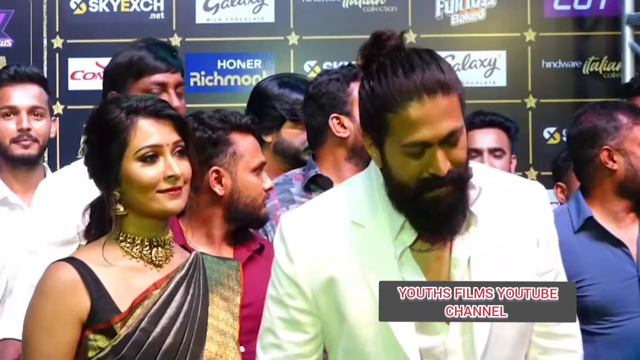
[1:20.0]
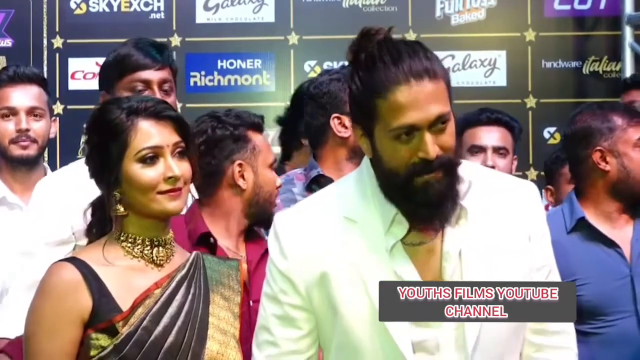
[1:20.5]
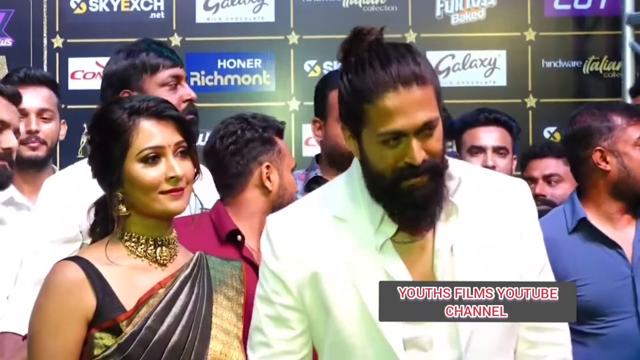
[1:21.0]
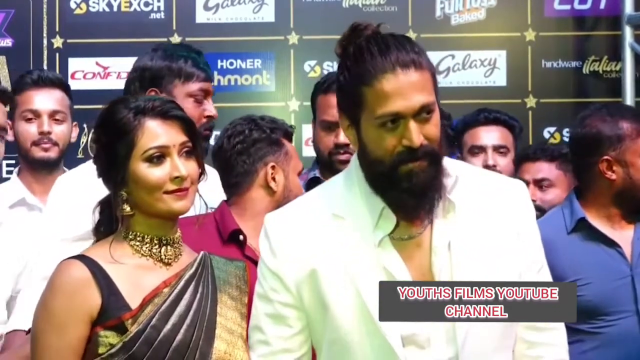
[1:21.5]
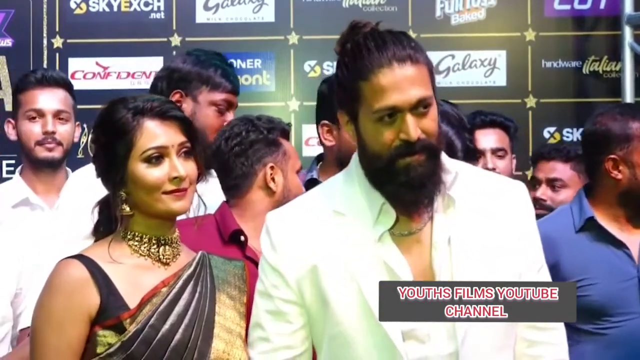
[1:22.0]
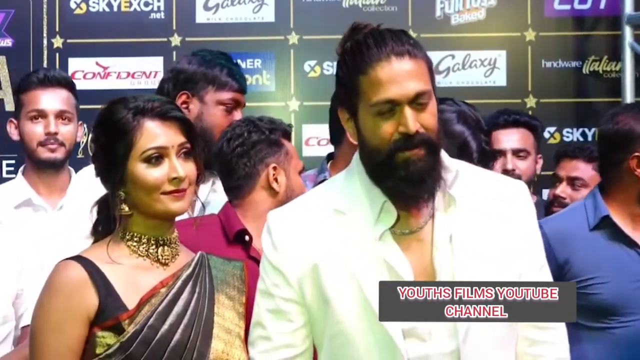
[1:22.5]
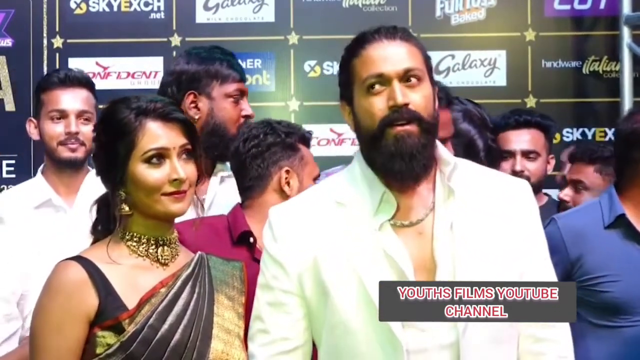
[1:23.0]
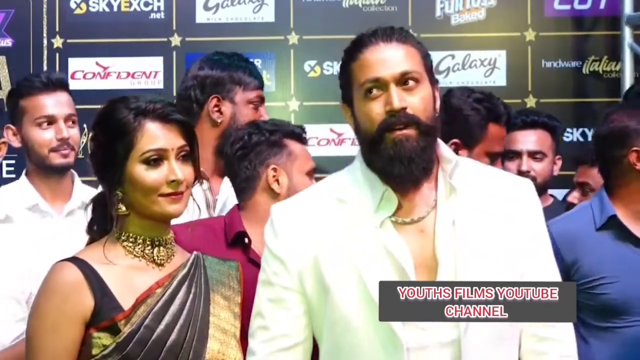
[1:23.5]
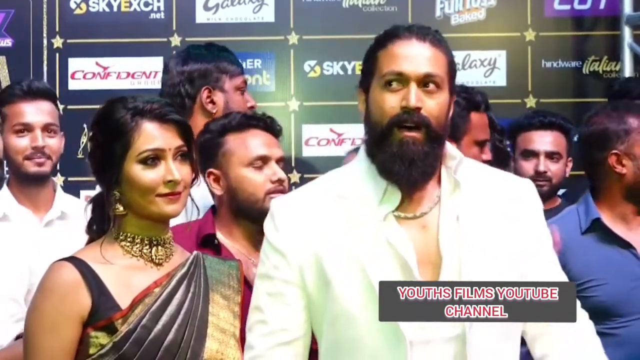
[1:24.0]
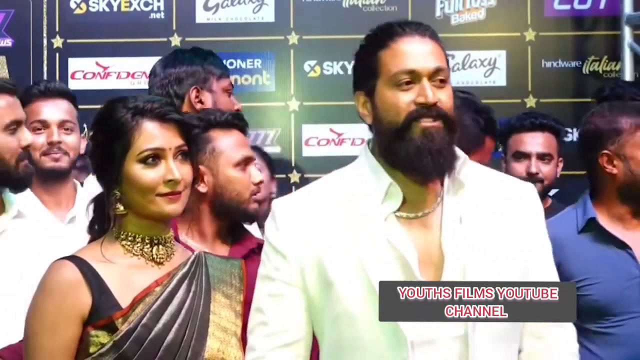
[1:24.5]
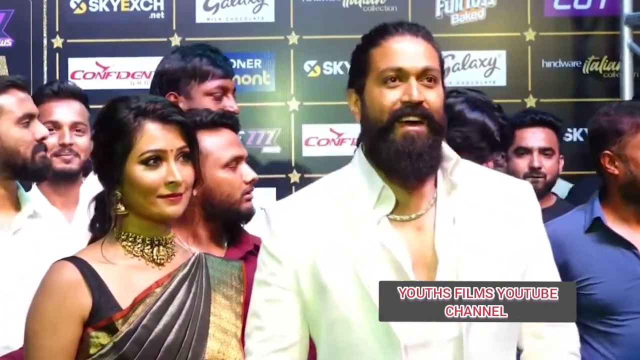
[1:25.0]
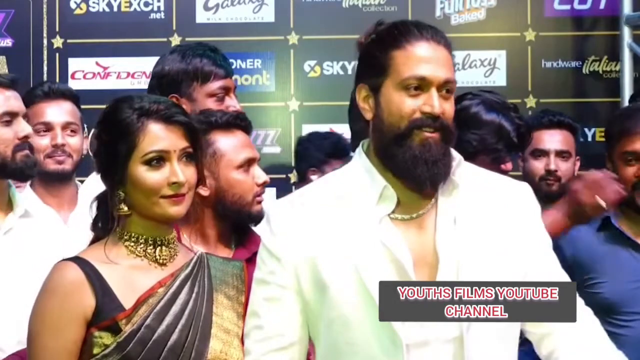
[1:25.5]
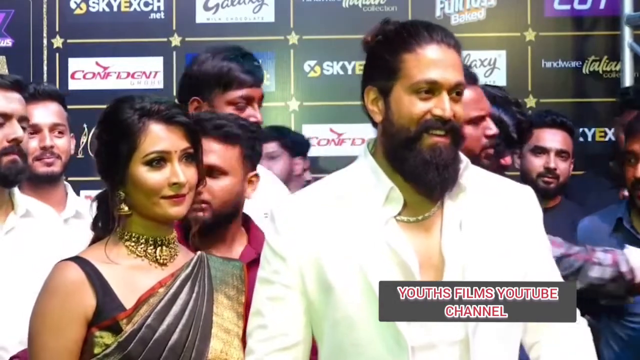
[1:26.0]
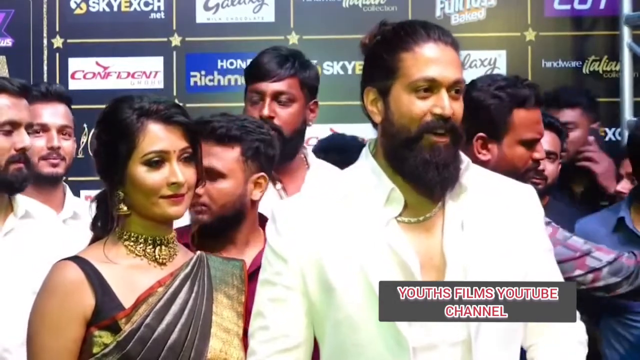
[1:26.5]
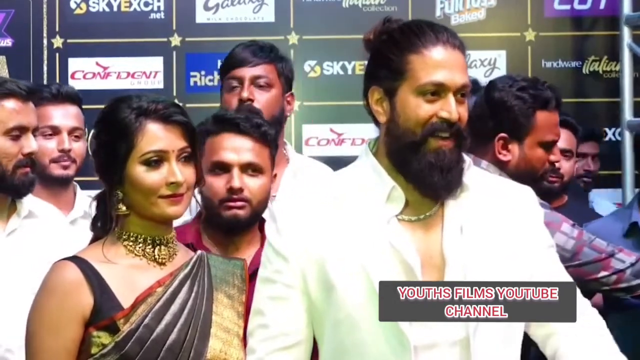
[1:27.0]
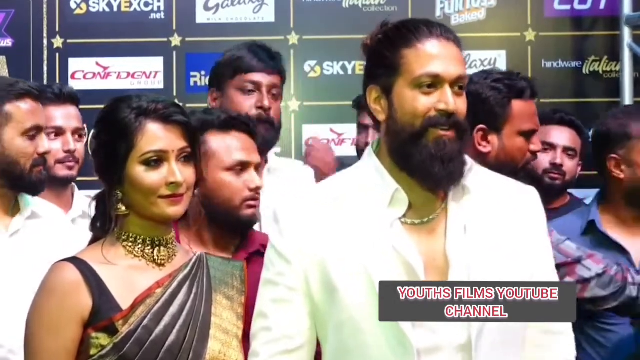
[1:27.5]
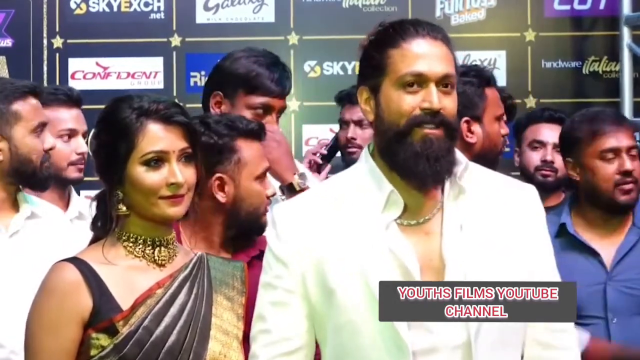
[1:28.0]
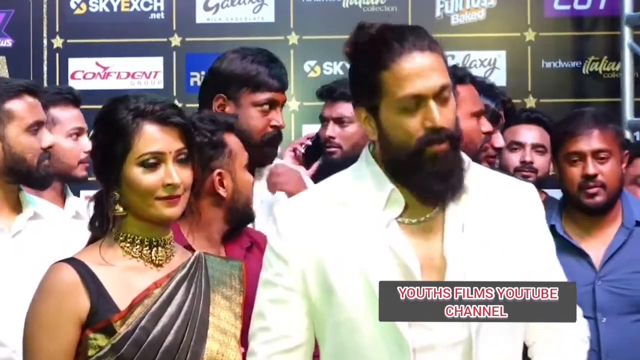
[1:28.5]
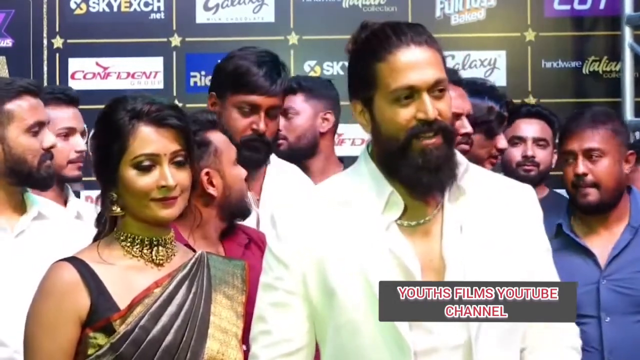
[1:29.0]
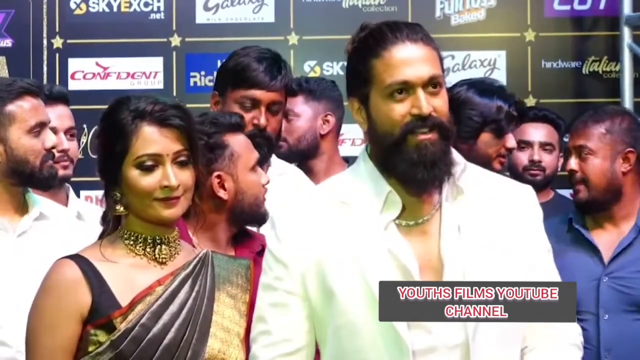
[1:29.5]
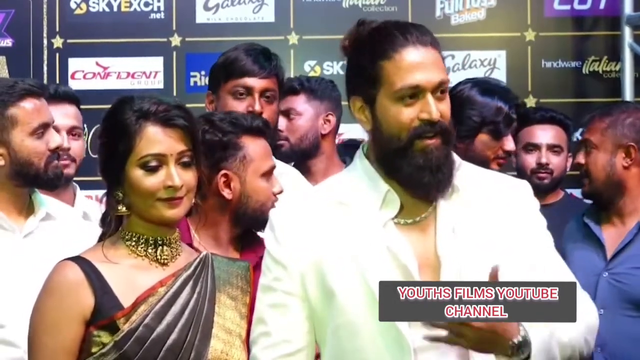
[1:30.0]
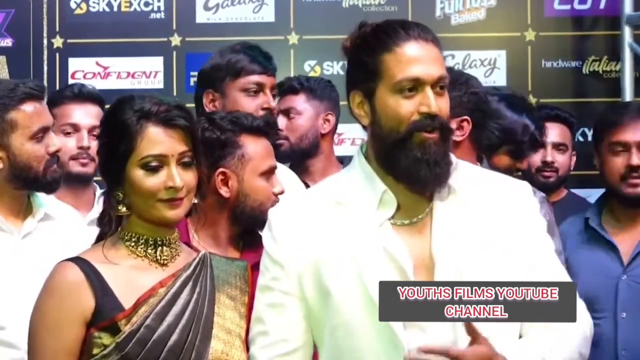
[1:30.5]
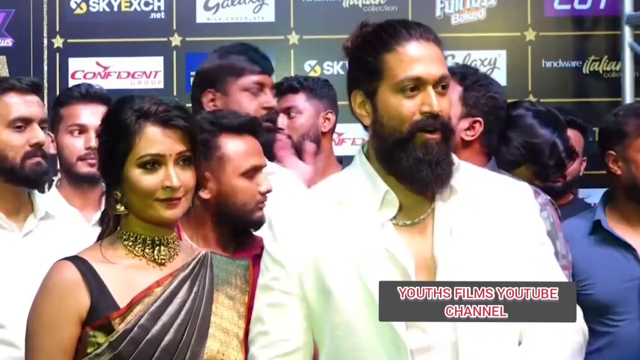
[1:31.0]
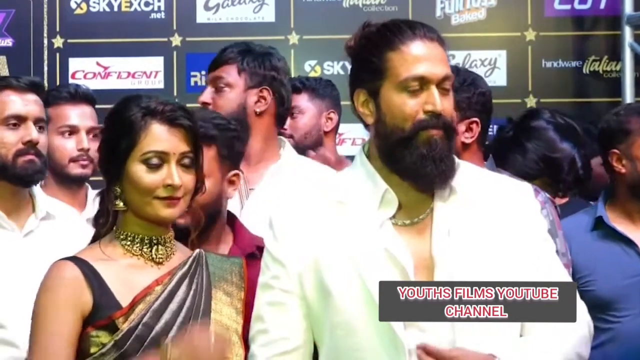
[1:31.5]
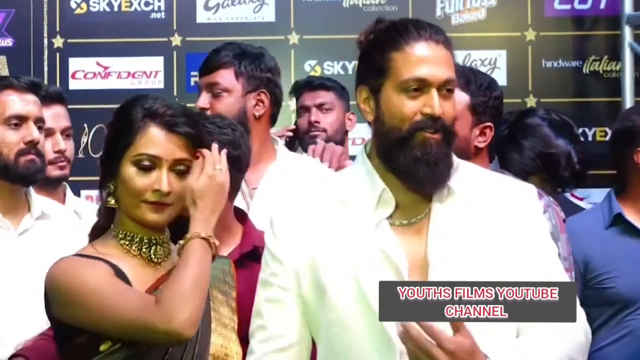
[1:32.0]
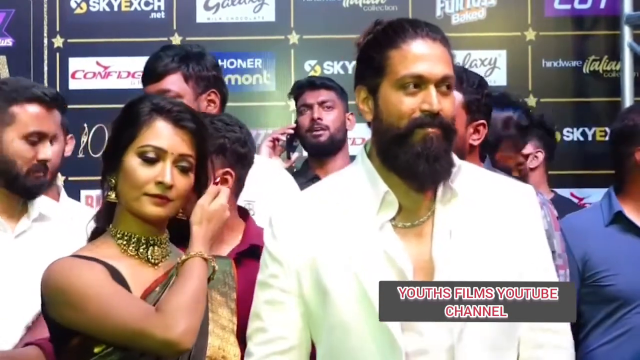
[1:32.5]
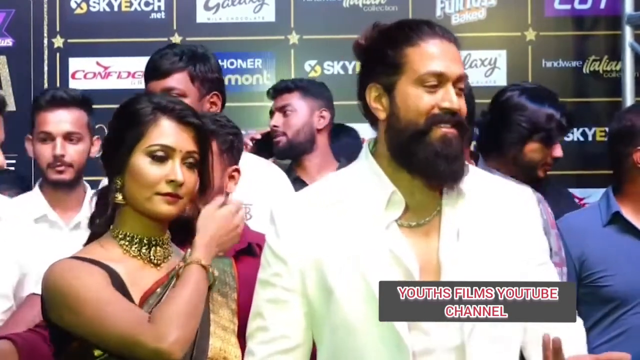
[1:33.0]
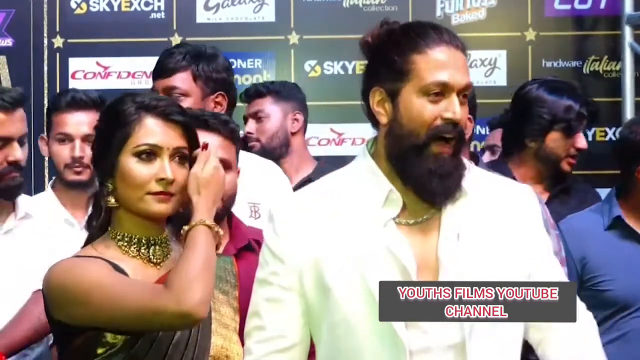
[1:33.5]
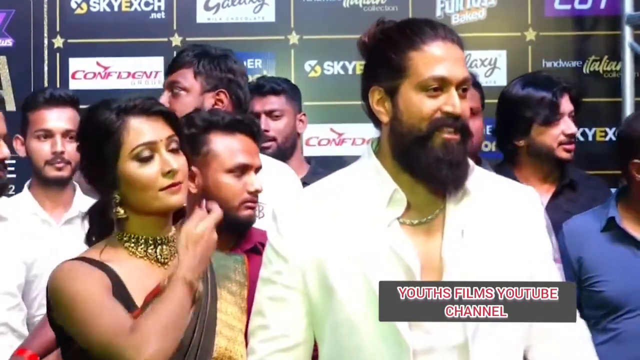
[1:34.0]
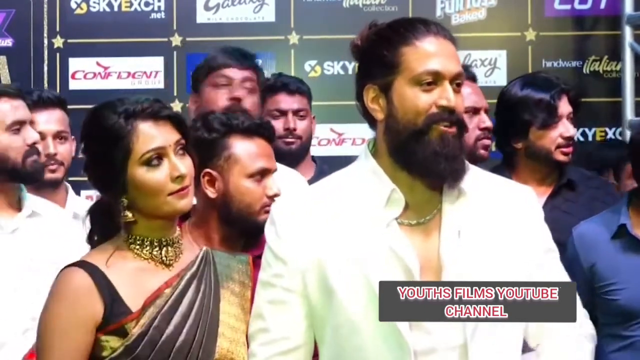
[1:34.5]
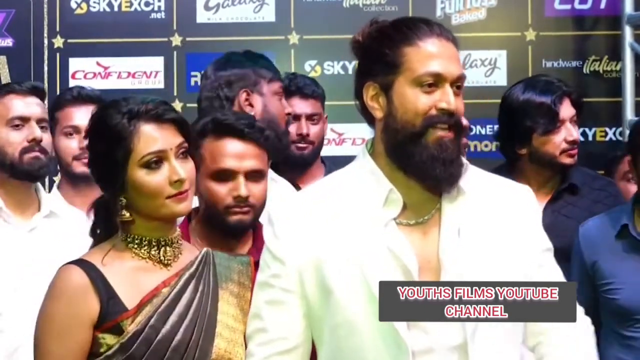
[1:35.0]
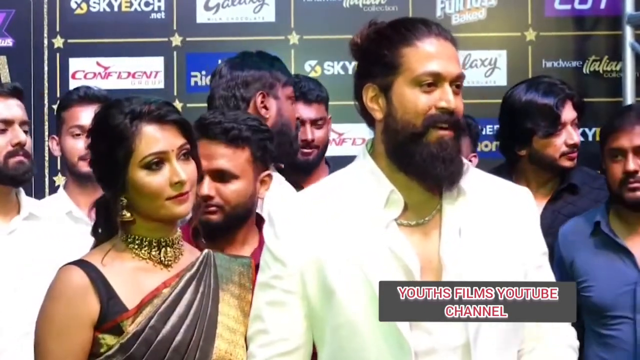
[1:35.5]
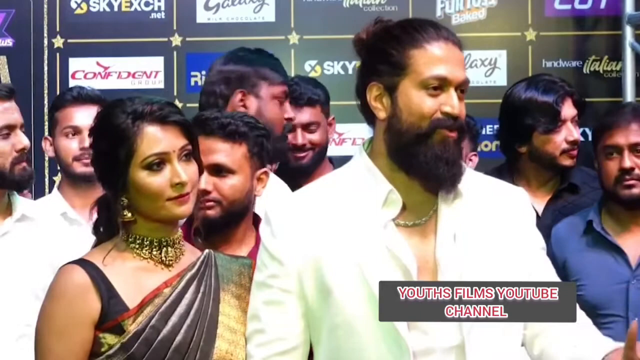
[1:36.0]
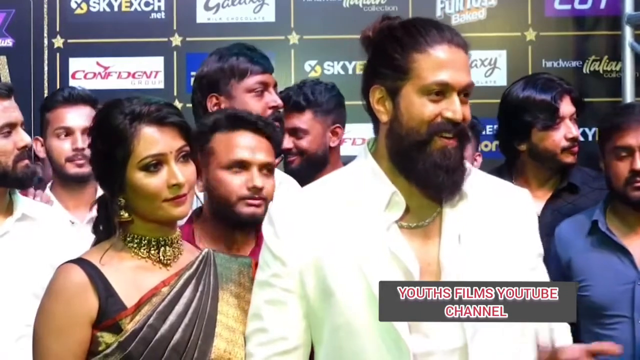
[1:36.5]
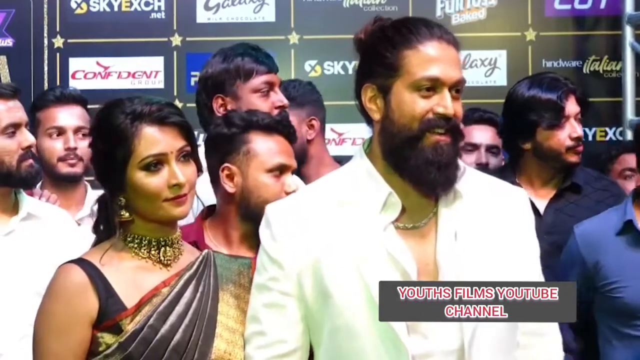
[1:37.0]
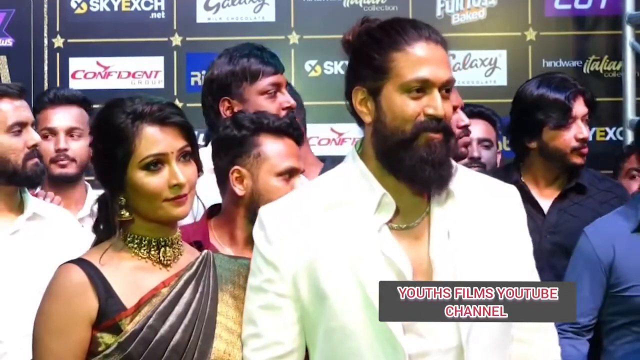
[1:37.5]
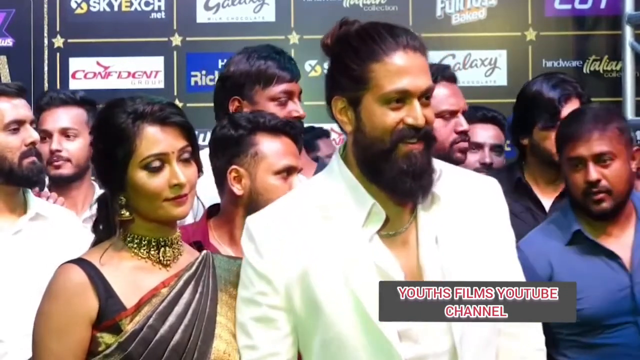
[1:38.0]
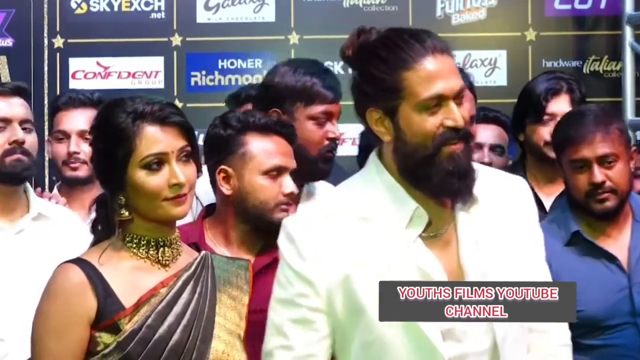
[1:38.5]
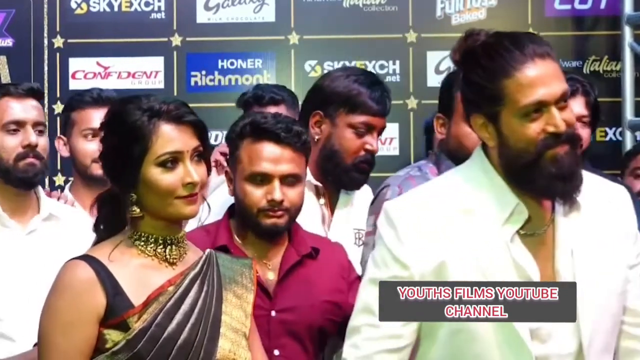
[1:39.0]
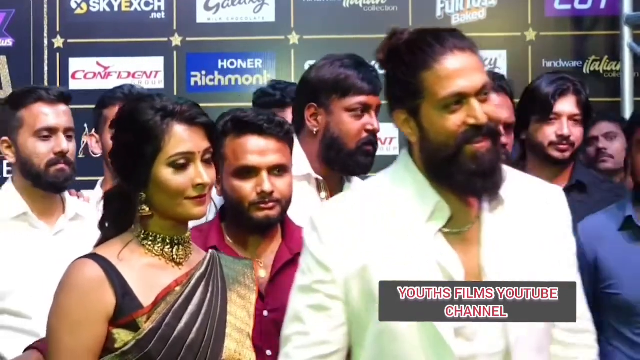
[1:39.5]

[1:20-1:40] The man and woman talk to the press at some kind of event. The man, in a white suit unbuttoned down to the mid chest and a gold chain, gestures a little while talking to the journalists, smiles and nods his head. He has a full beard and mustache and dark hair tied up into a bun. The woman is also standing and looking at the press; she wears a brown and gold sari and gold jewelry, her hair is in a low ponytail, and she smiles and nods along as he talks. Press journalists or photographers are crowded around them and kind of all look to the right simultaneously. Behind them all is a light-up screen covered in a grid of company logos, presumably sponsors of the event.